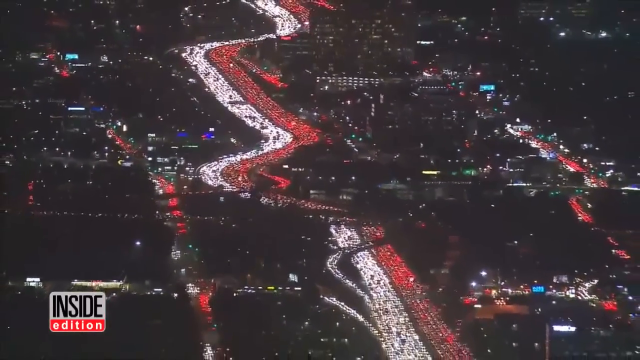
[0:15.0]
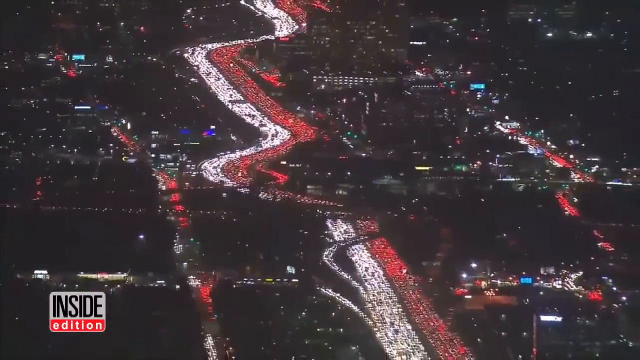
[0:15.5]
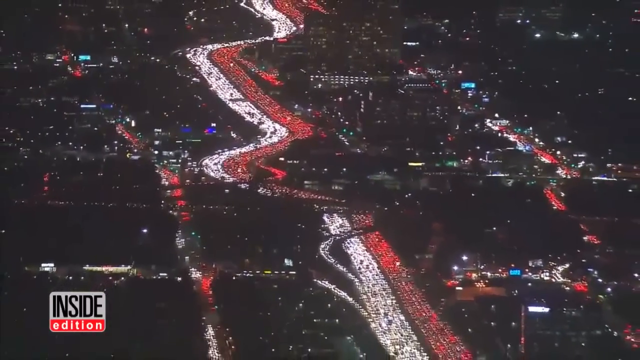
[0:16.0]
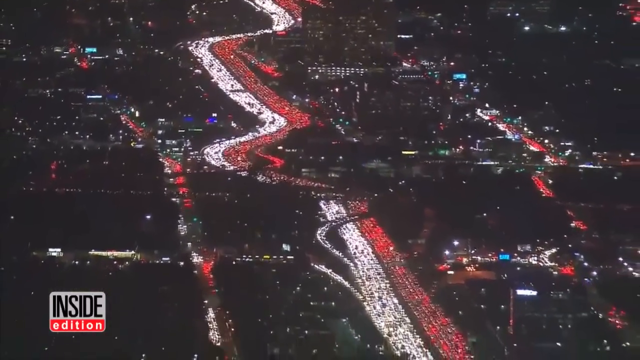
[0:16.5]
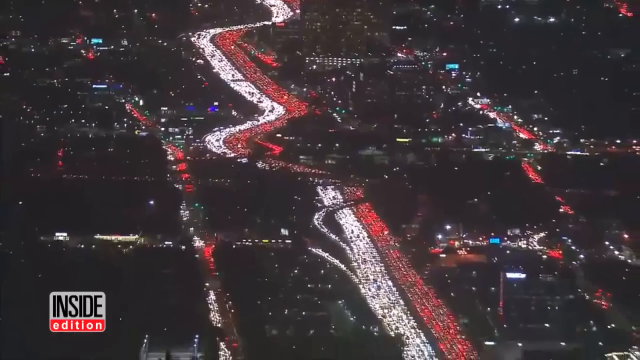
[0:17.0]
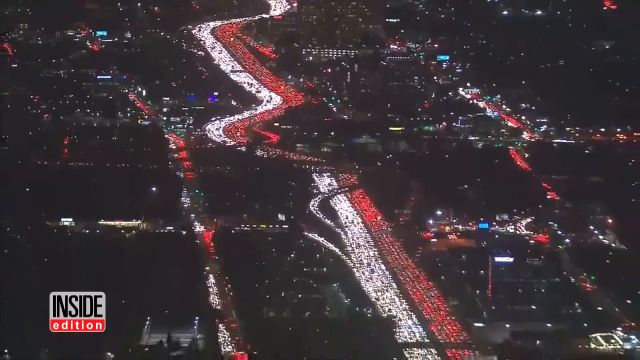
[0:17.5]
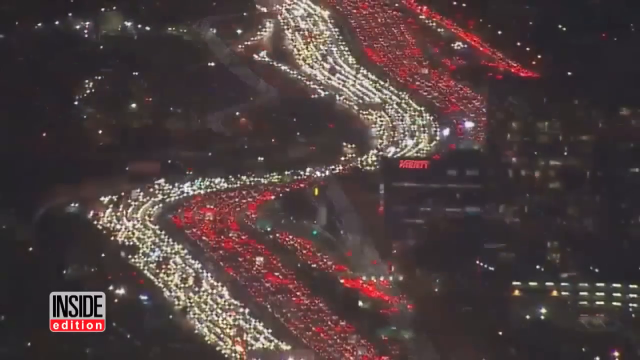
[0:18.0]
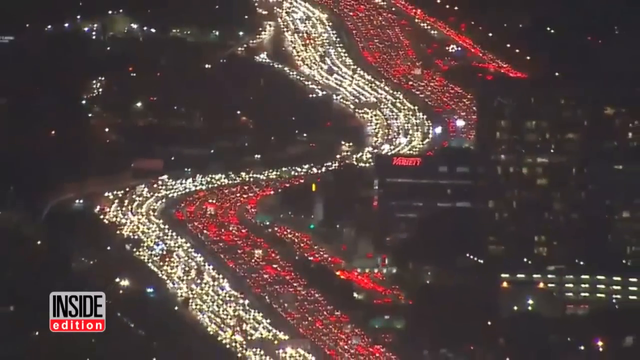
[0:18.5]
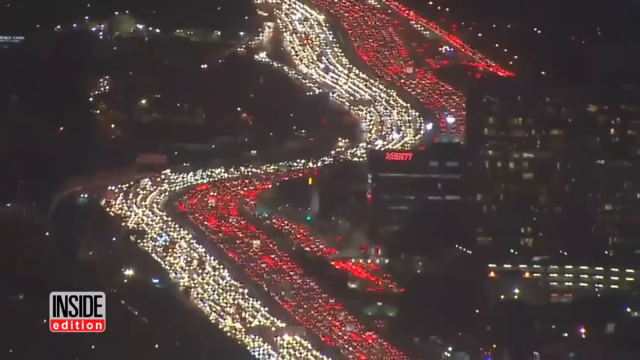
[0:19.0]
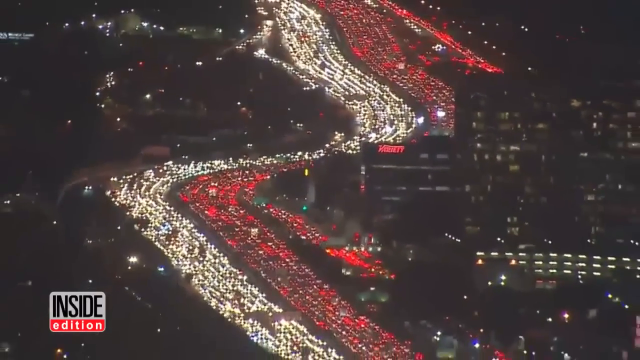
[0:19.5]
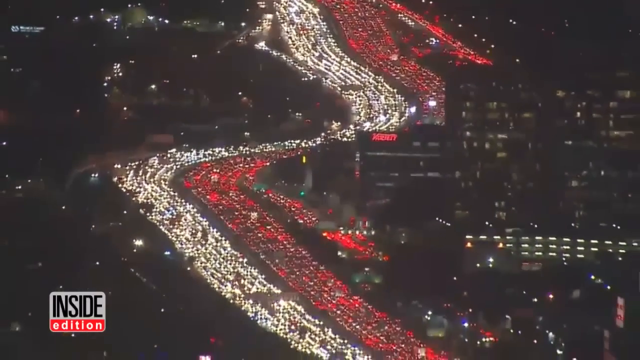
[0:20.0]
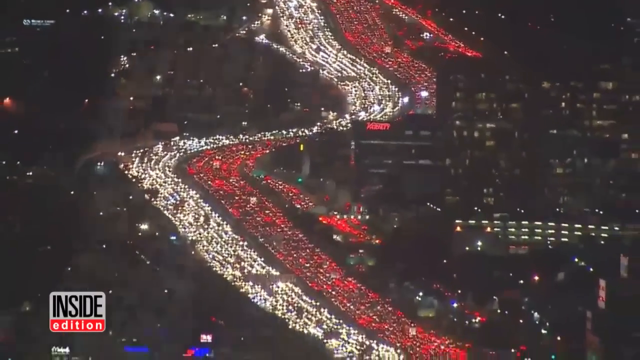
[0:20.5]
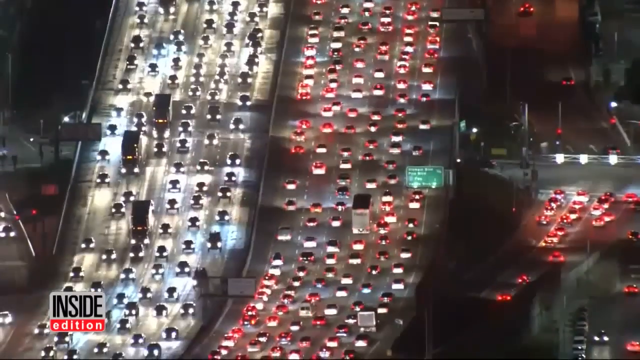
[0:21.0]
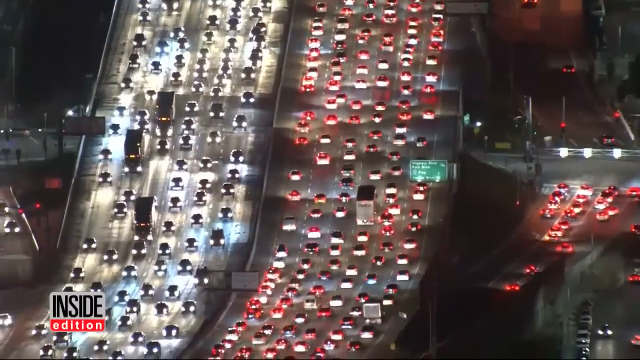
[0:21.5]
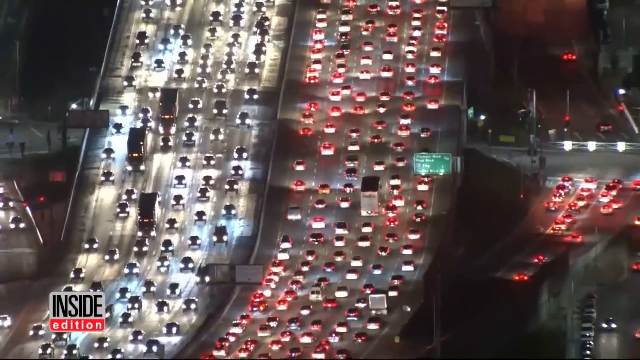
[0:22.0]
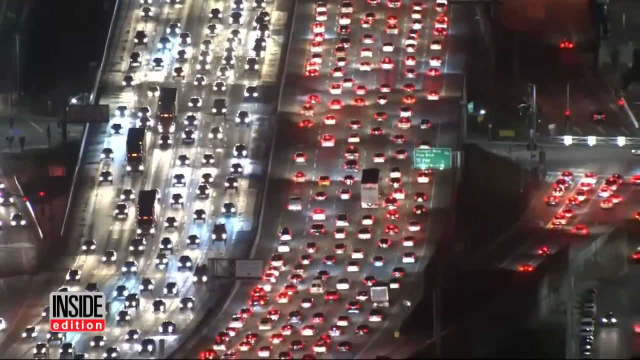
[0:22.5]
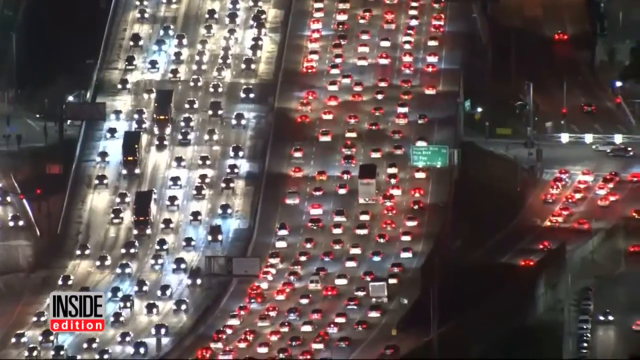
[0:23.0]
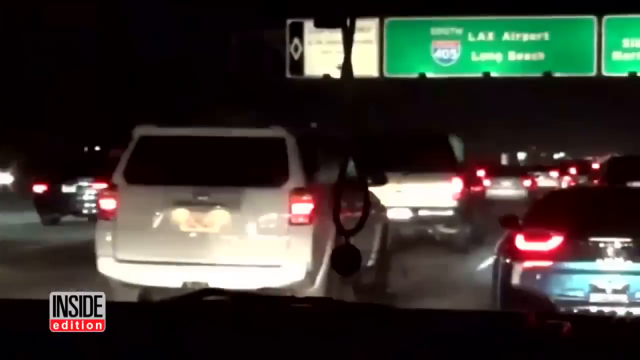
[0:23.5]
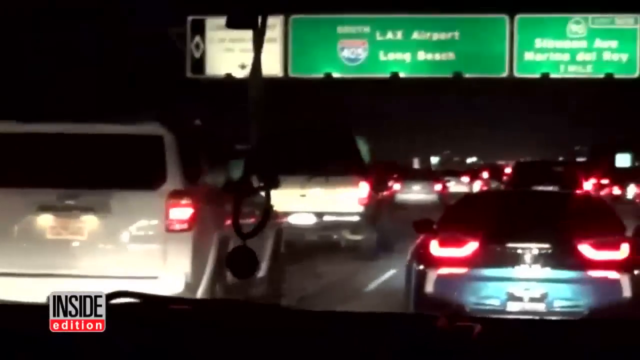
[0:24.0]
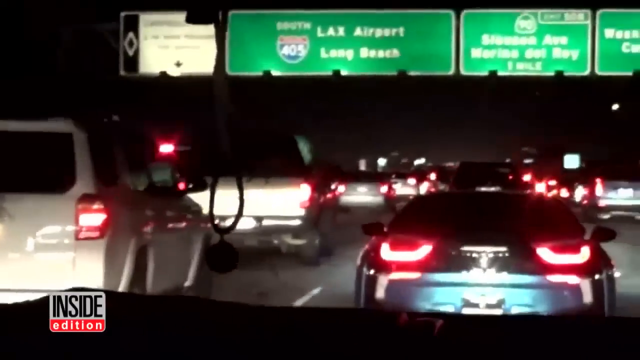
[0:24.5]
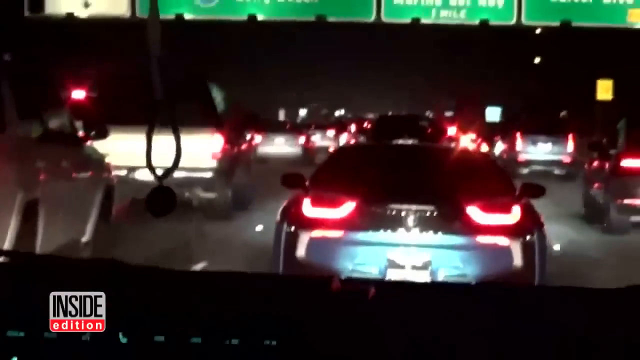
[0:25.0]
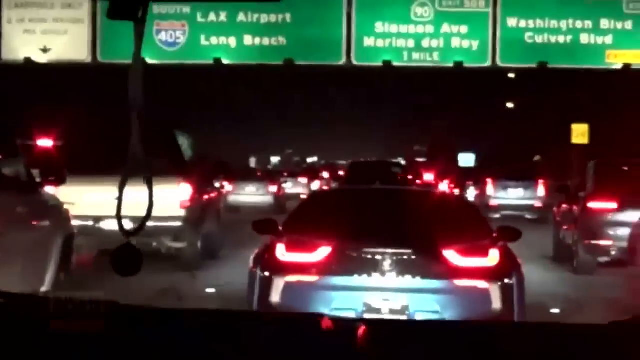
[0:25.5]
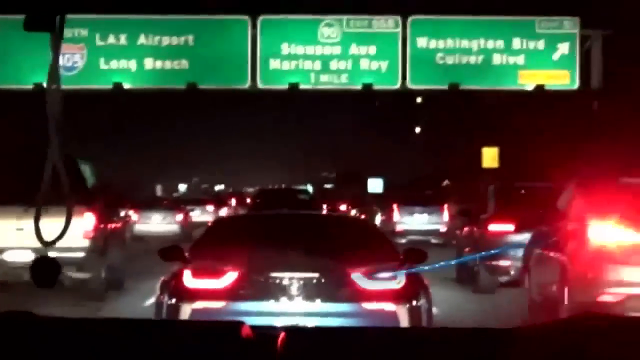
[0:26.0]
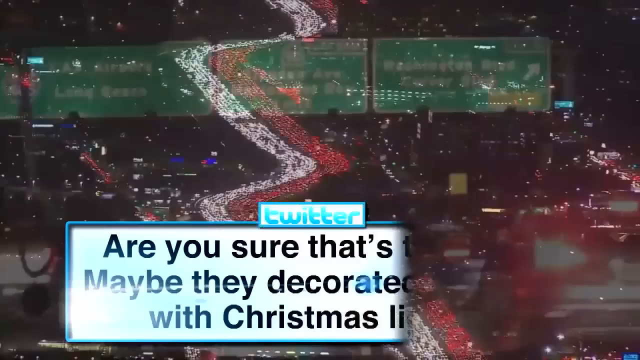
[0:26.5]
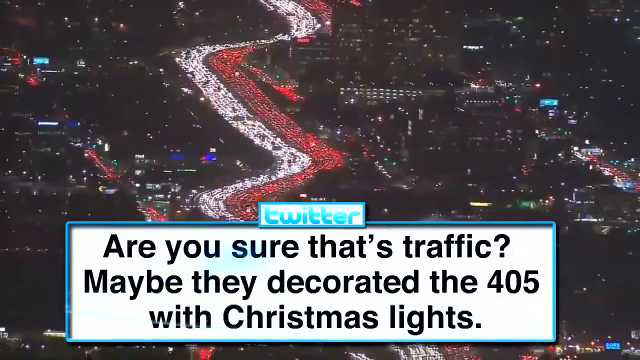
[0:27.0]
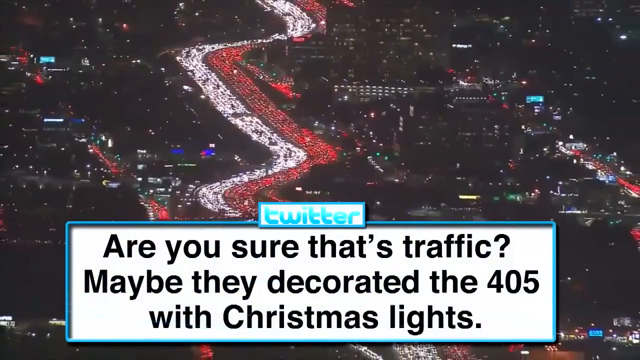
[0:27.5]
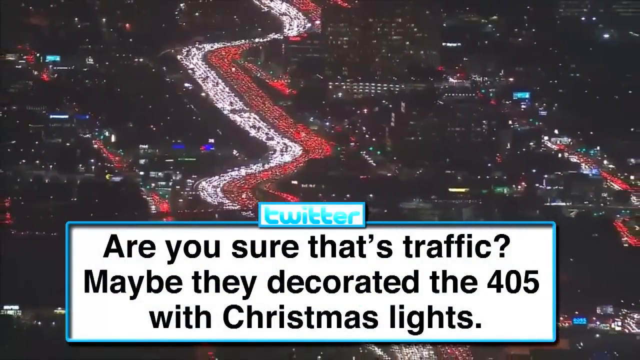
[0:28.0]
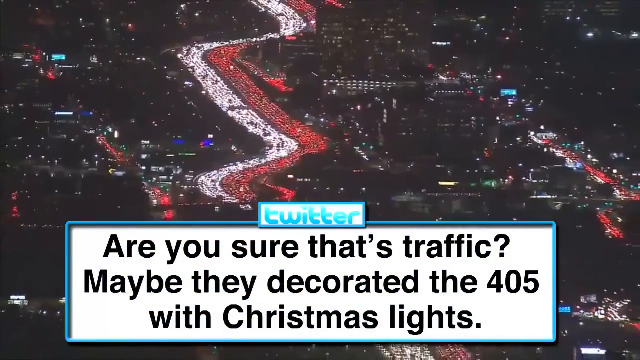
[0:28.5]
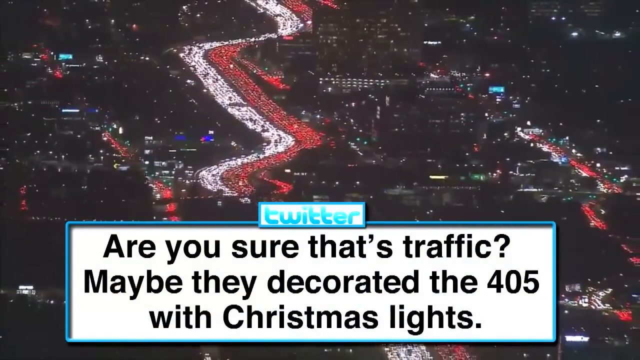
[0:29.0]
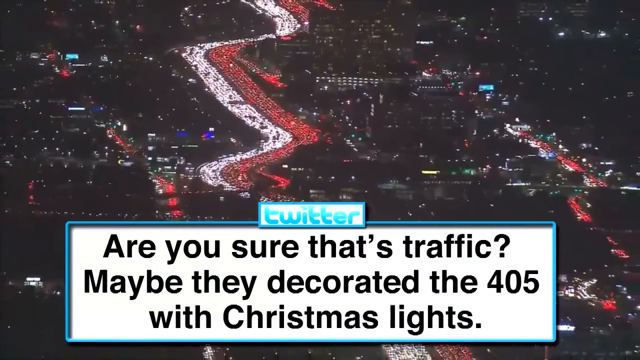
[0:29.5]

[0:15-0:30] The traffic jam continues, with the view panning down and zooming out, shown from different overhead angles and from someone's dash cam footage. A Twitter comment pops up in a white box with a blue border and a Twitter logo at the top center, with black text reading: "Are you sure that's traffic? Maybe they decorated the 405 with Christmas lights." The white and red lights are traffic on the 405 in a very busy part of Los Angeles, and as the view zooms out, the jam goes on for miles across the skyline.